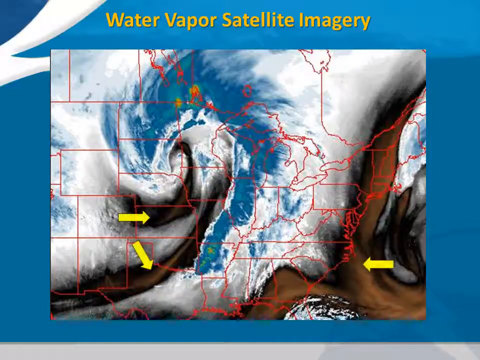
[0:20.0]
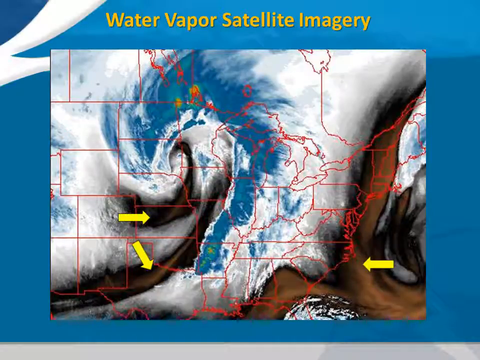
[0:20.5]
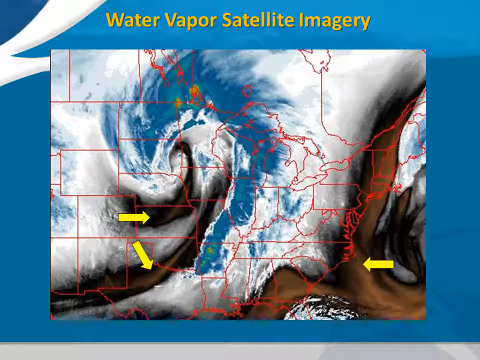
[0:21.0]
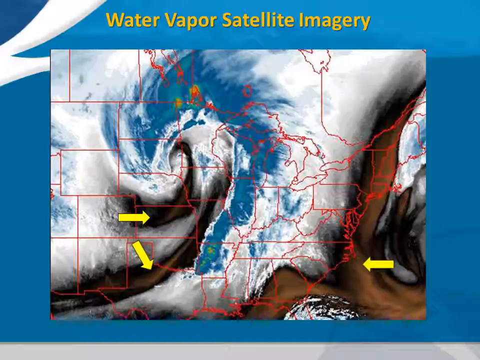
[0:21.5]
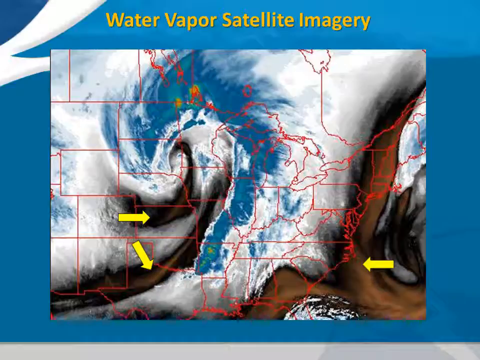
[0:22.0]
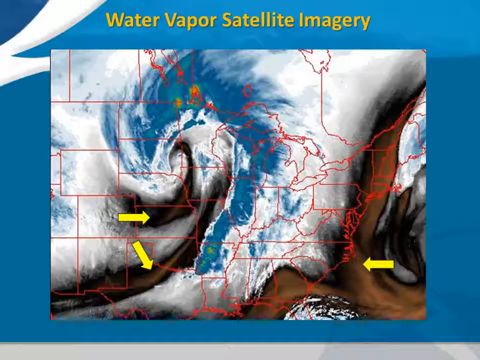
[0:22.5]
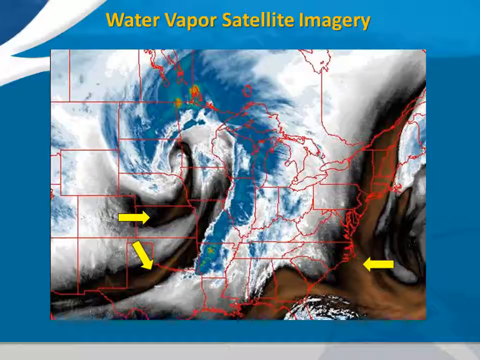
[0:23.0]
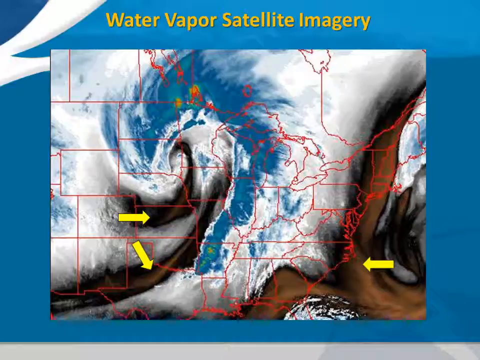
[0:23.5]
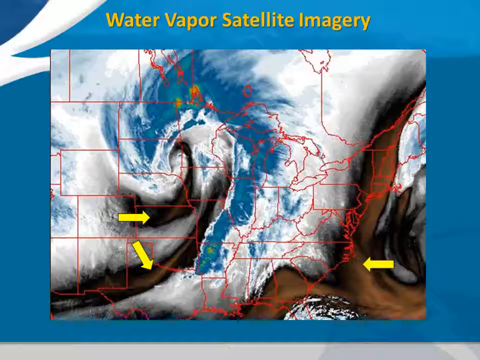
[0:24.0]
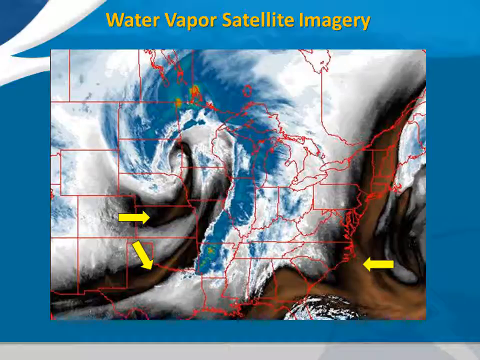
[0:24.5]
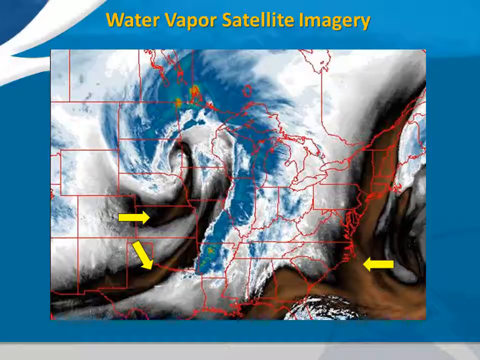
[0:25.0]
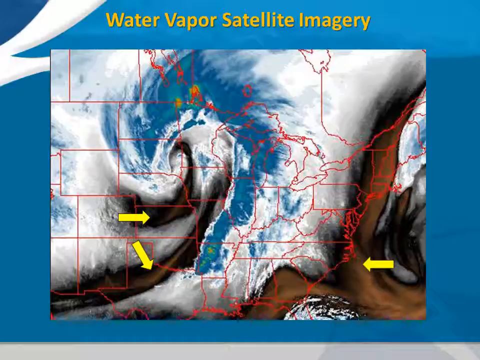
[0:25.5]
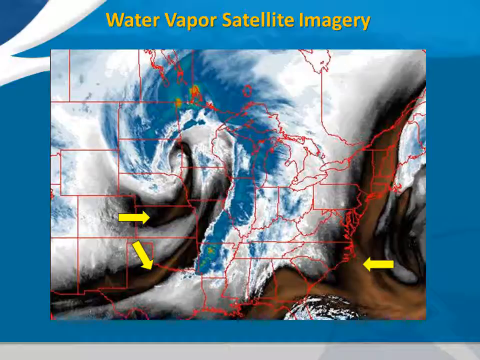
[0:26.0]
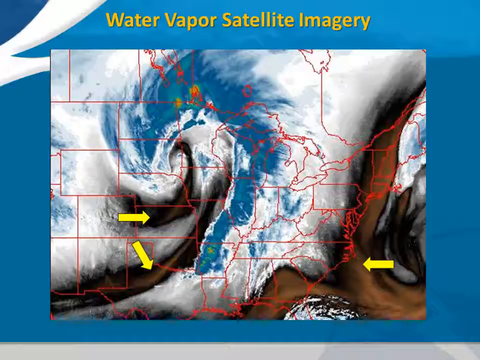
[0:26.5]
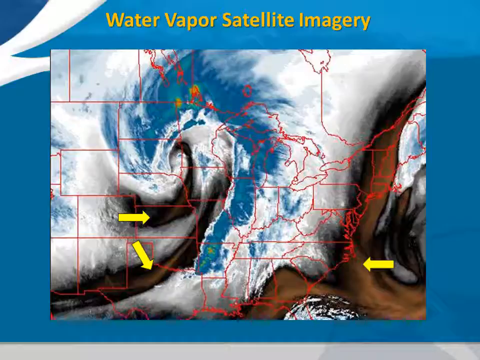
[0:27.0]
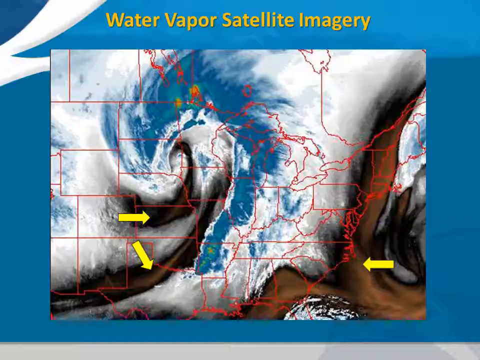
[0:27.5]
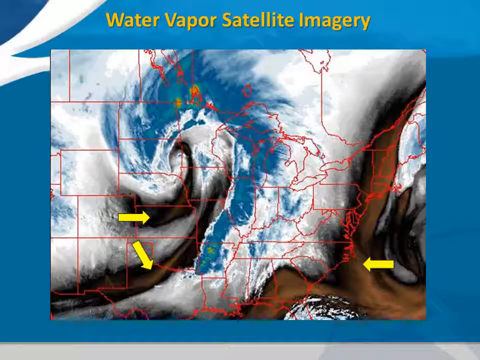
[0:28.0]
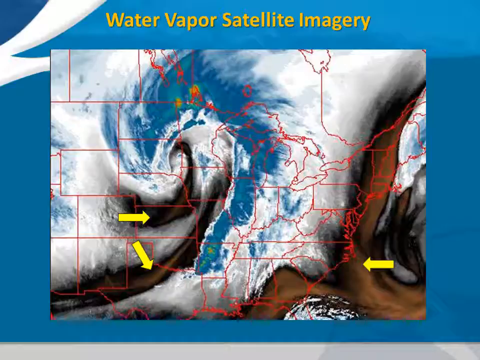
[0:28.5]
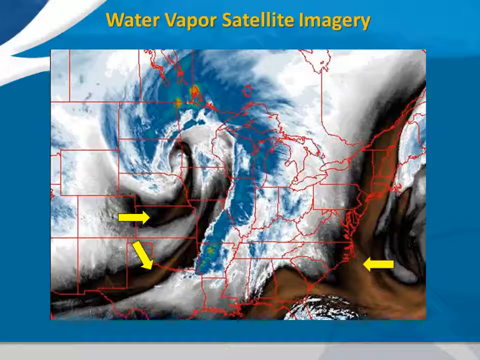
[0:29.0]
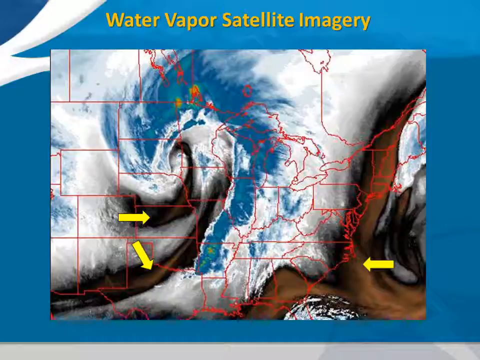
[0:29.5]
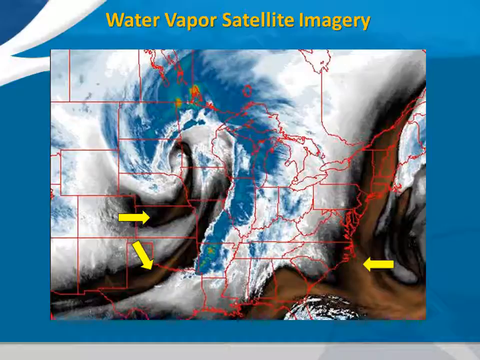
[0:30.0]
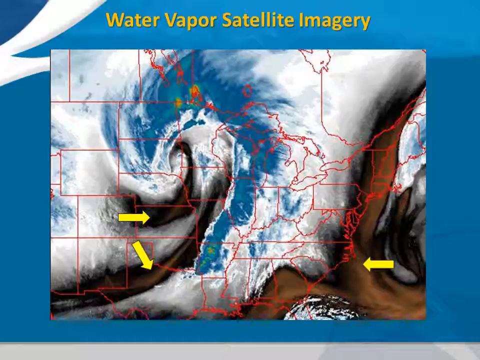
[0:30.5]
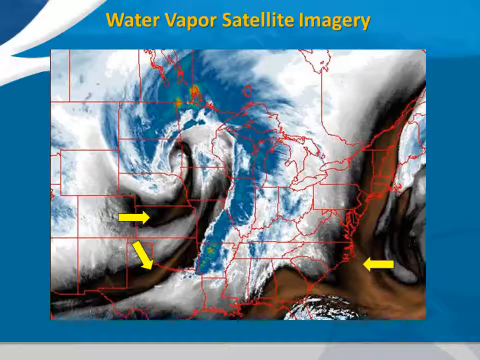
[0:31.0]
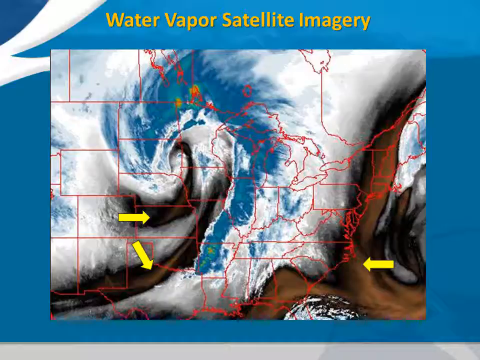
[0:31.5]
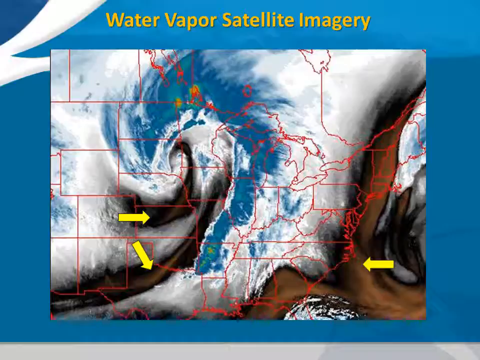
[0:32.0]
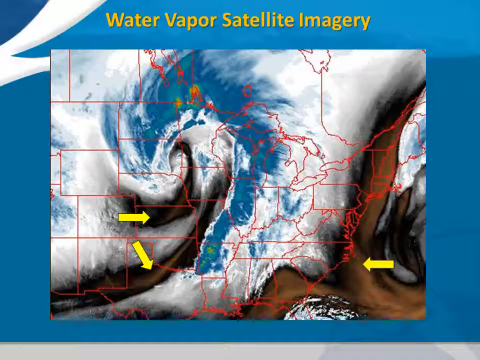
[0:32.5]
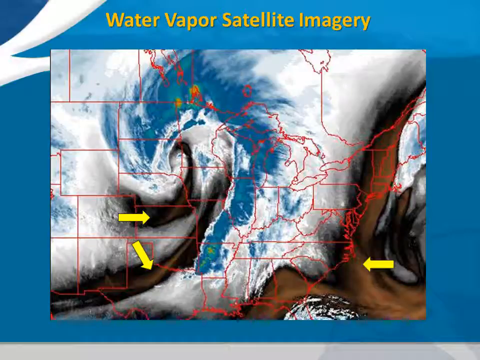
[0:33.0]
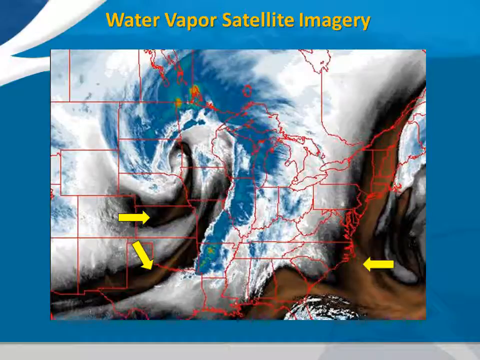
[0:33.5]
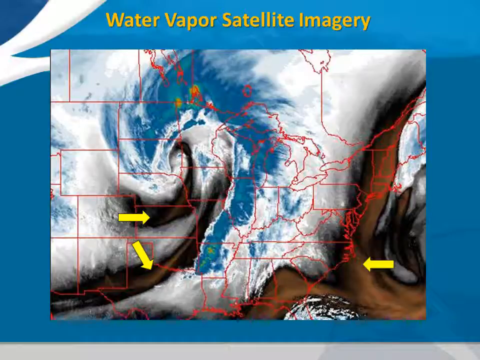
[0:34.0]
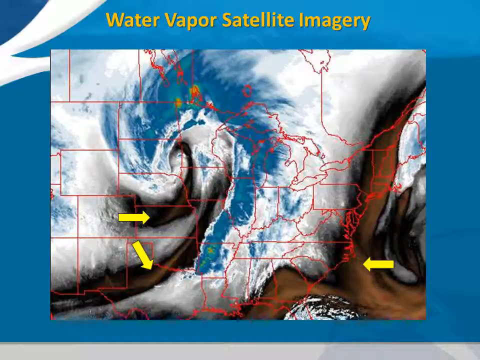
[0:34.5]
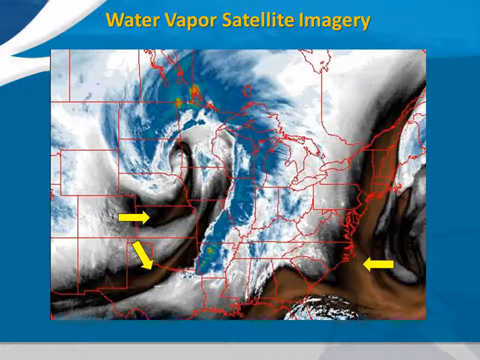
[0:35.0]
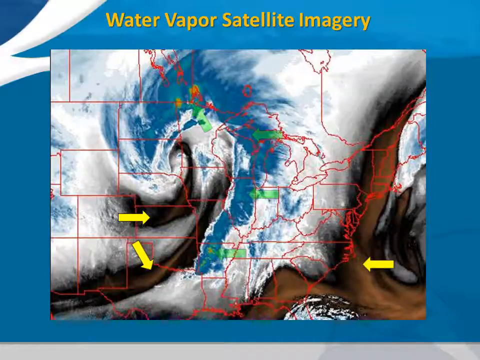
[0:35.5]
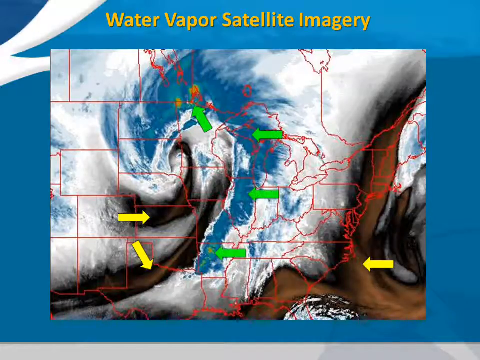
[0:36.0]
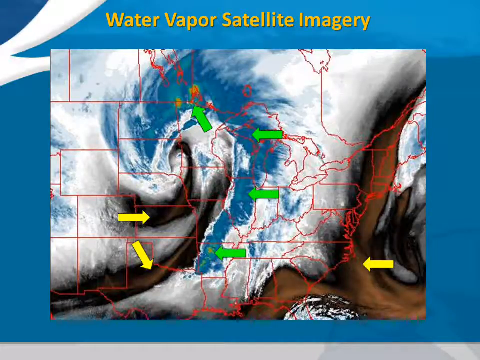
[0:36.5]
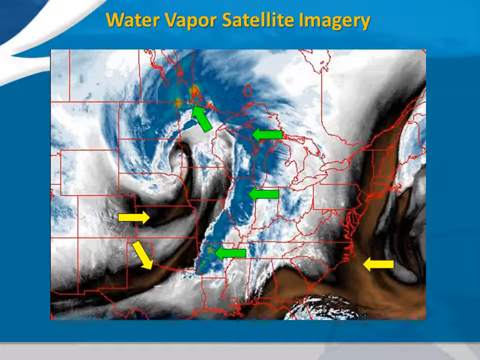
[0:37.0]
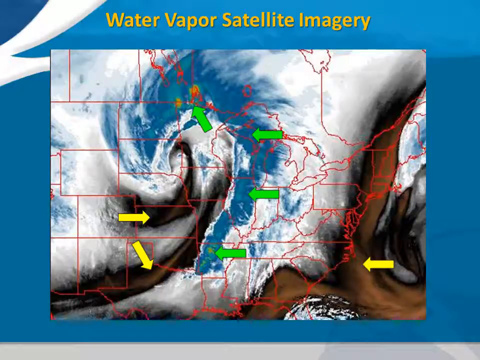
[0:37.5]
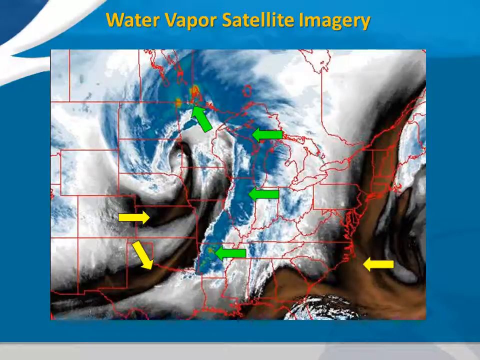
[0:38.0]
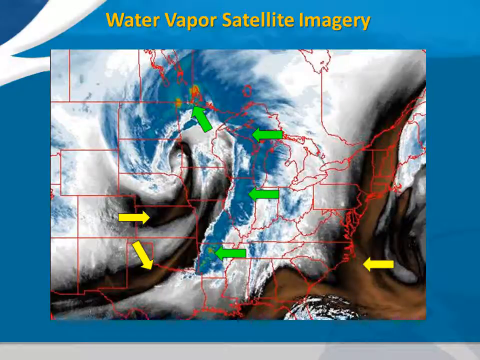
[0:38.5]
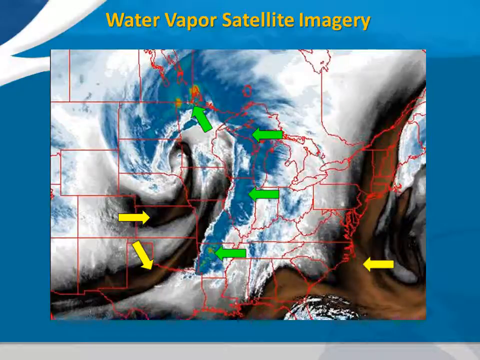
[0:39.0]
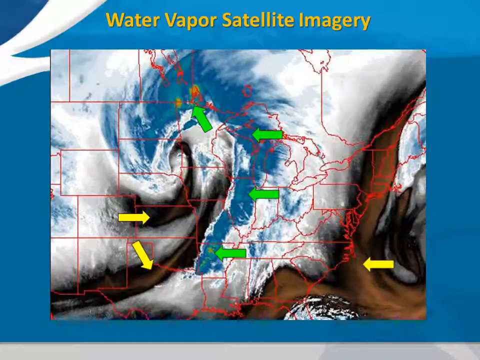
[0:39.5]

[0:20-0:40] A blue border runs around the edges of the screen, and at the top yellow text over the light blue of the border reads "water vapor satellite imagery." In the center of the border is a map of possibly North America, with an overlay of the United States and part of Canada. A swirly-looking cloud formation covers the United States; it is mostly white, with a blue vortex-looking shape in the center. The blue has green, yellow, red, and orange in certain spots. There is also some brown on the map, kind of chocolate in color, some of it swirling along the east coast of the United States. Green arrows appear as well: three pointing west along the edge of the vortex and one pointing northwest near the top of the vortex.